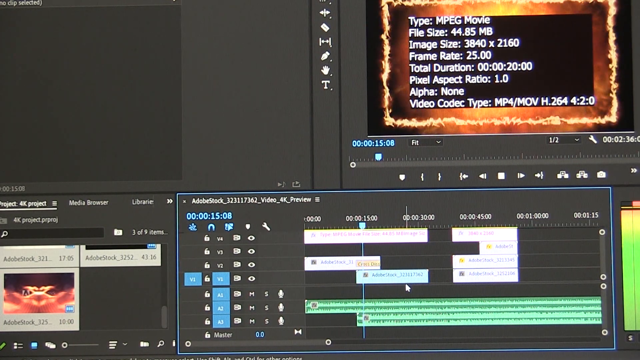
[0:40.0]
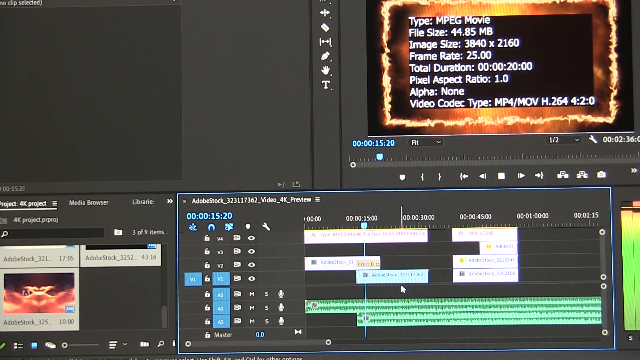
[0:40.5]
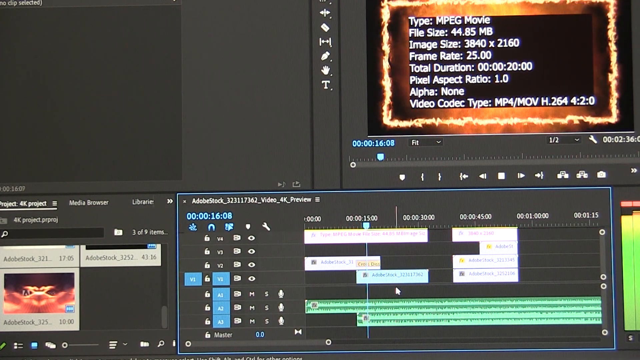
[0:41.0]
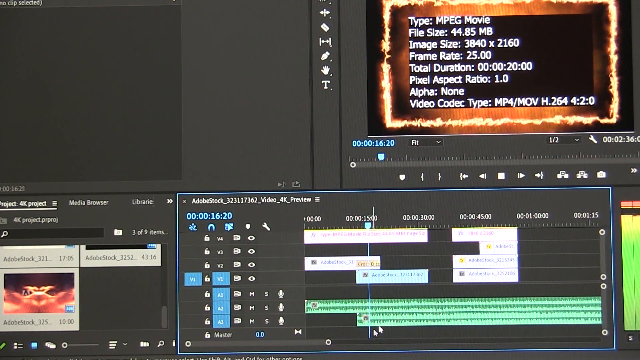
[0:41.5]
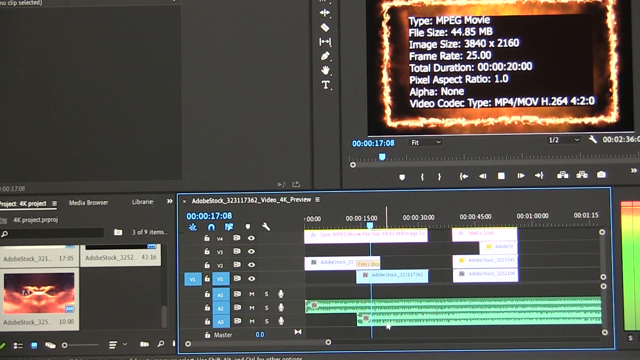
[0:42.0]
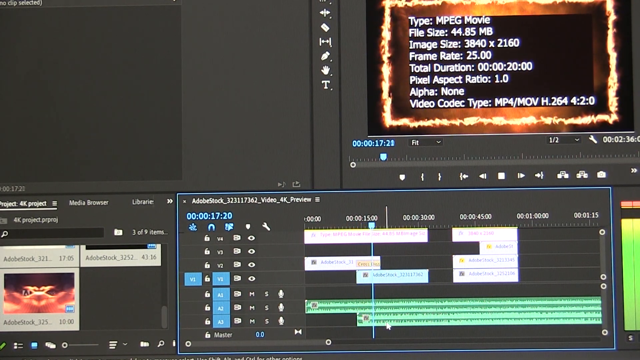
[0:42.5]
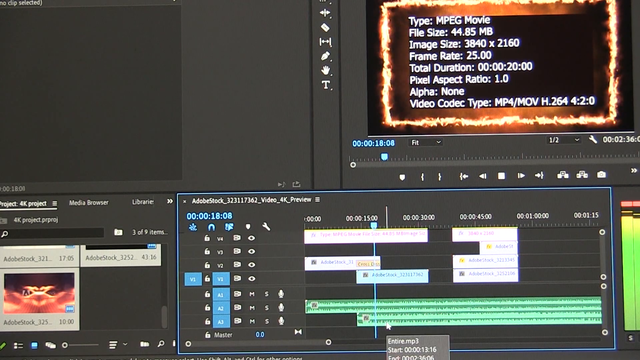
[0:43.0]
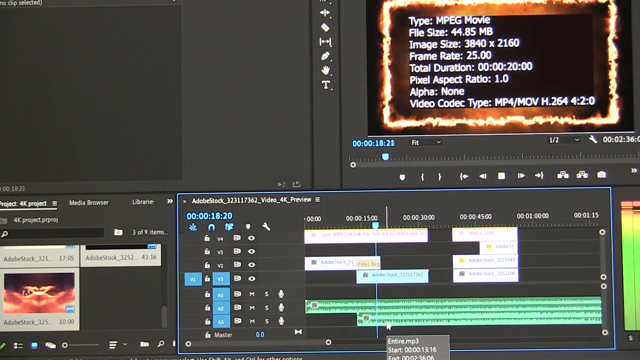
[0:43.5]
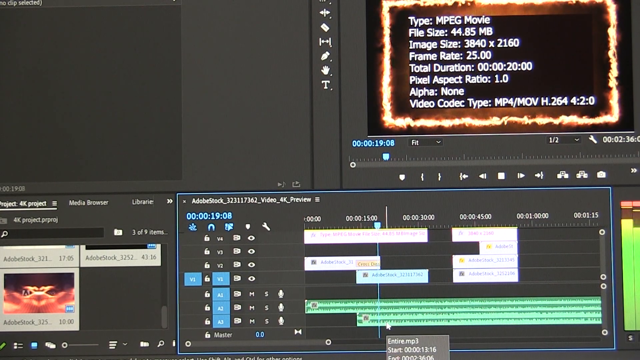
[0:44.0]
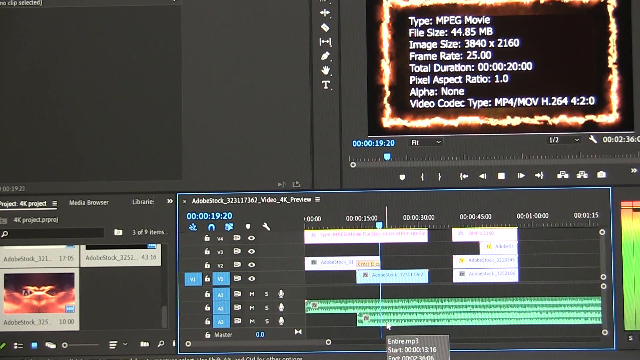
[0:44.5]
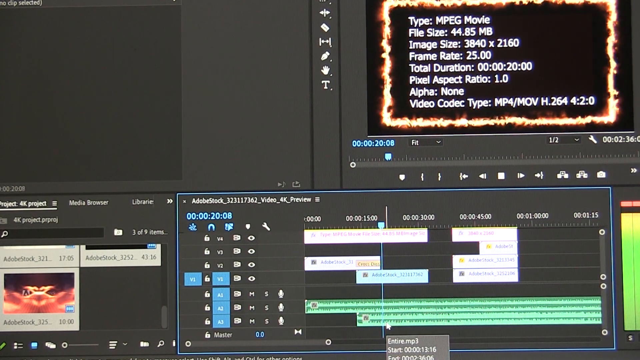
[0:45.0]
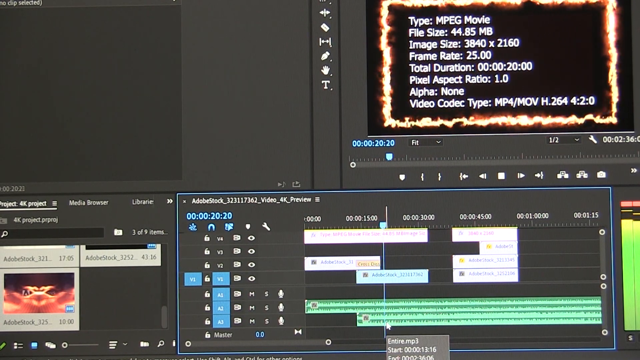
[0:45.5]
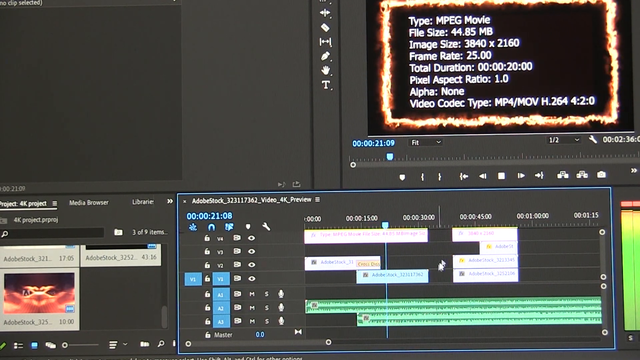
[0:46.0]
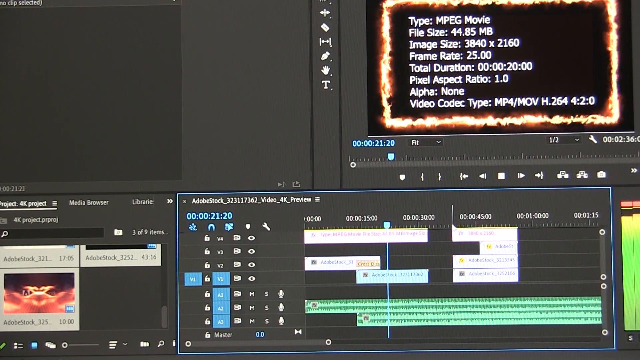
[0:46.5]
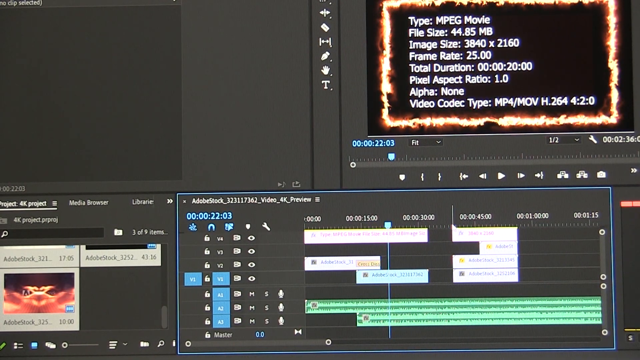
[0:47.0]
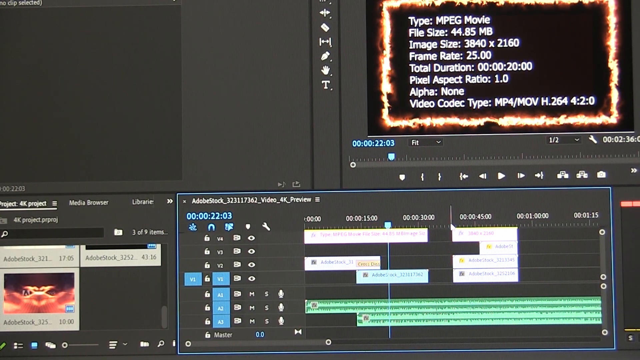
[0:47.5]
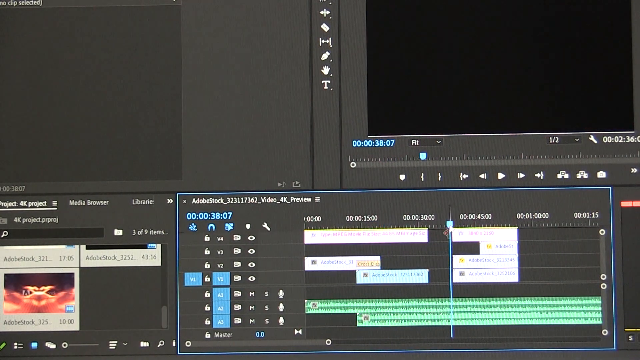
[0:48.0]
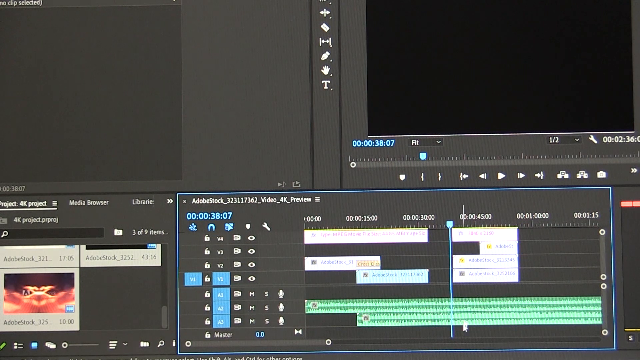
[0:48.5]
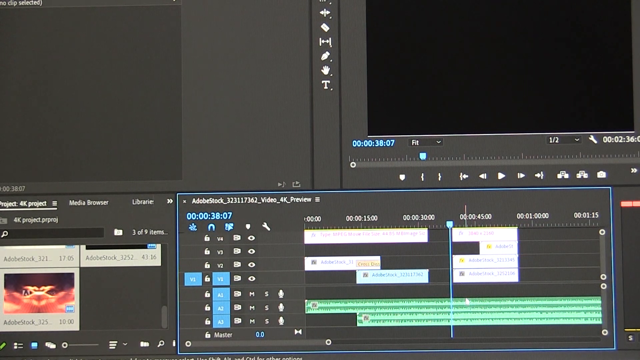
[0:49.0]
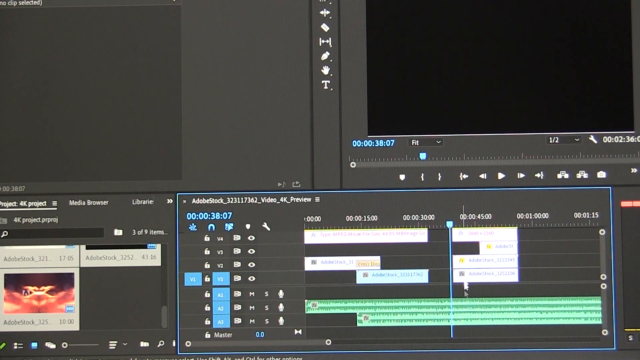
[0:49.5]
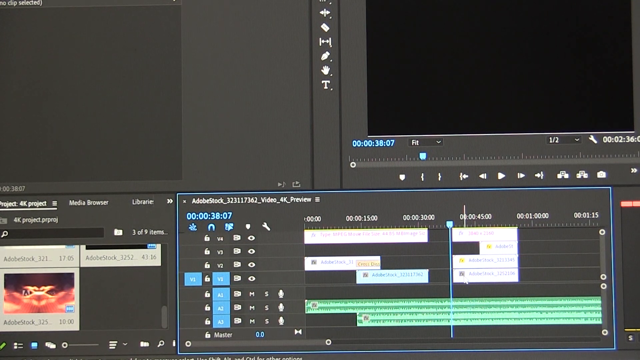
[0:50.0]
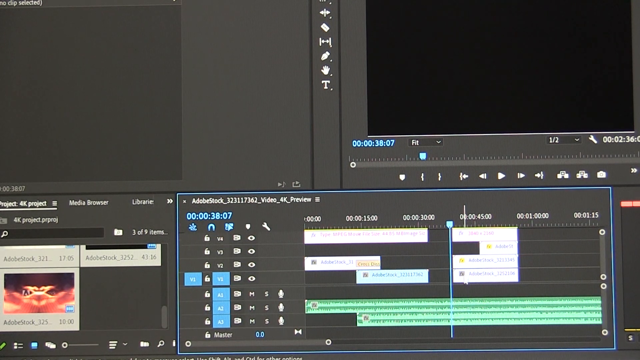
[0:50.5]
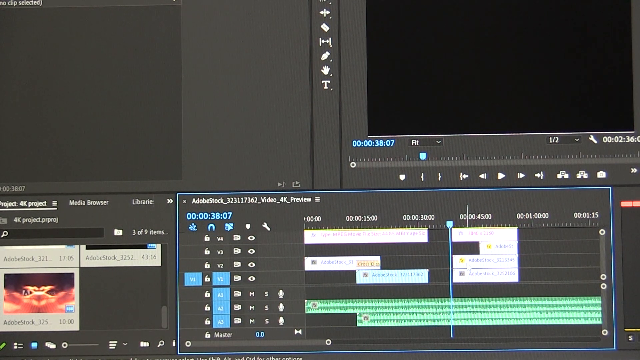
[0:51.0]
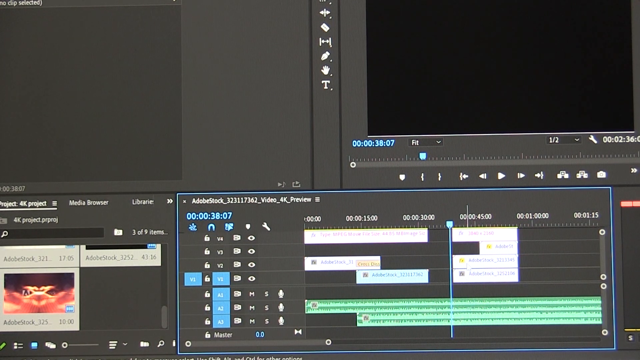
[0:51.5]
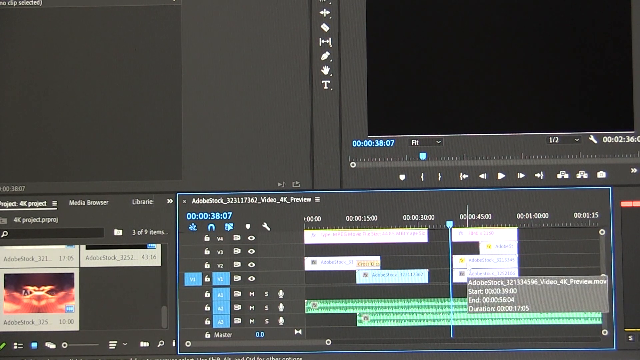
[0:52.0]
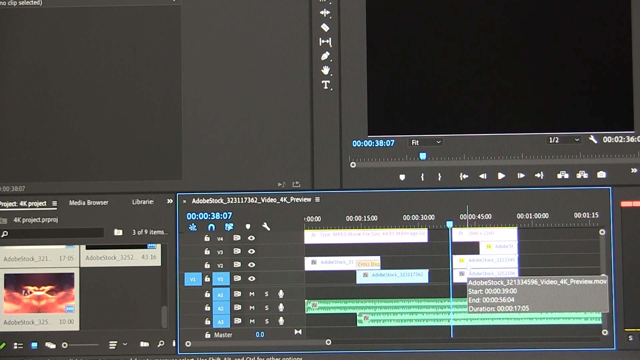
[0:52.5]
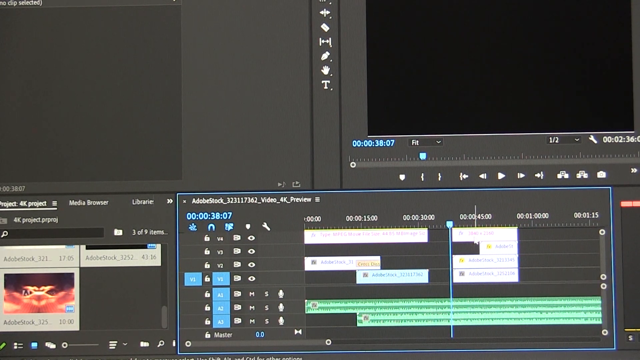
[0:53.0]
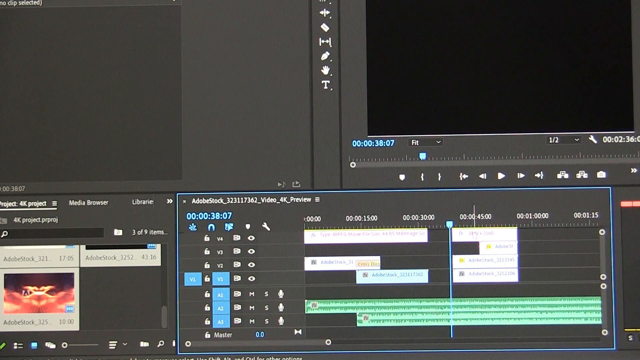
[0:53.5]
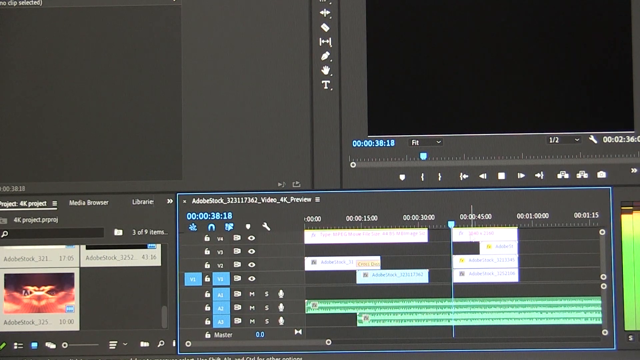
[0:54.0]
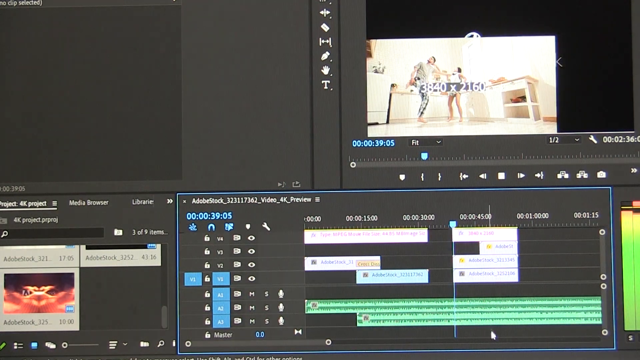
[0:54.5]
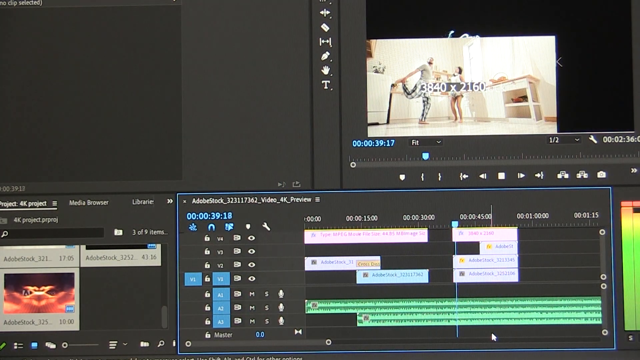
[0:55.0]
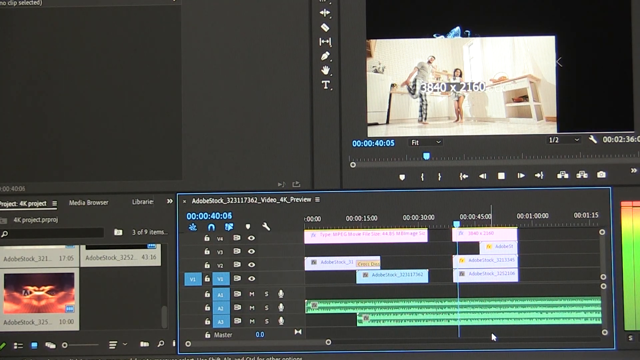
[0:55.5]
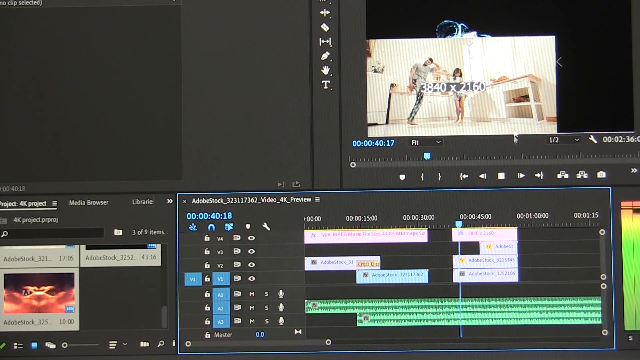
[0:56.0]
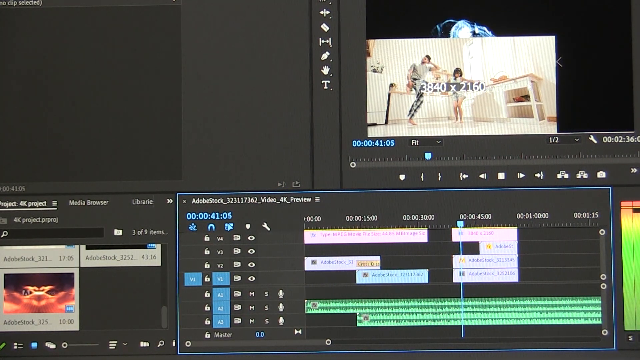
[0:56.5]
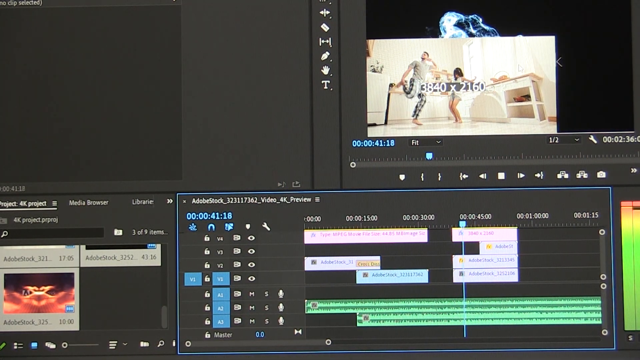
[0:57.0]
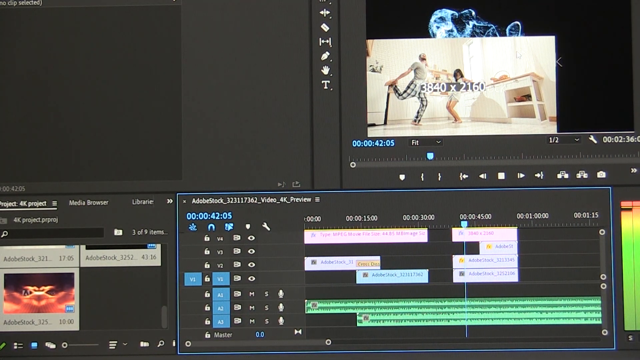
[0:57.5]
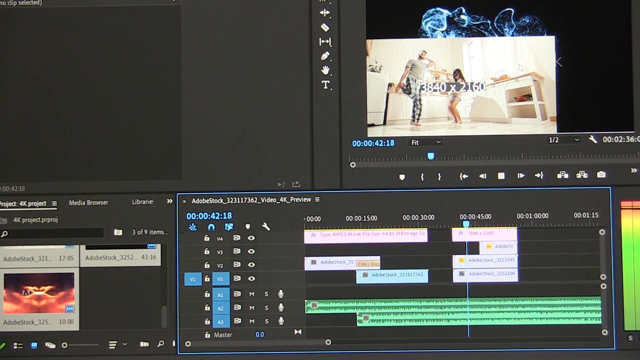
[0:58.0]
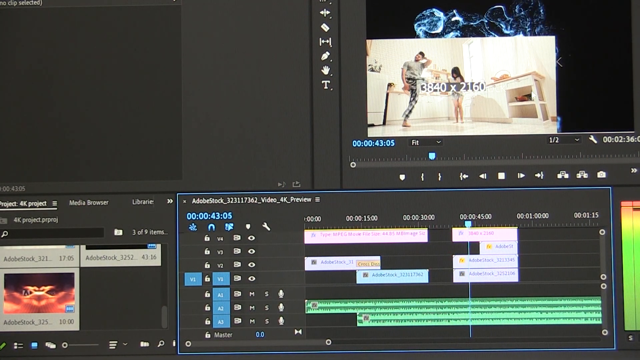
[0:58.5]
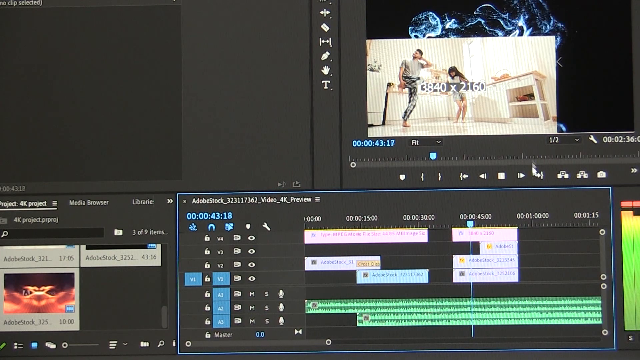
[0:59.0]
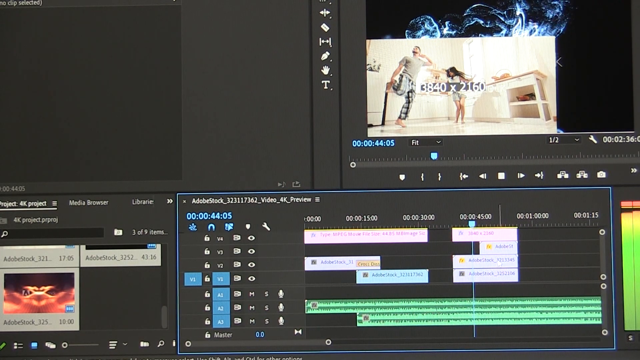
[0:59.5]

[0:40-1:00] The video keeps playing as the view heads toward the right side, reaching a blank black screen. Then a 3840 by 2160 pixel video appears showing a man and a woman, probably dancing, with a background of moving water. Adobe Stock is visible along with some numbers and a video 4K preview, and other pictures on the right-hand side are labeled "Adobe Stock 325".